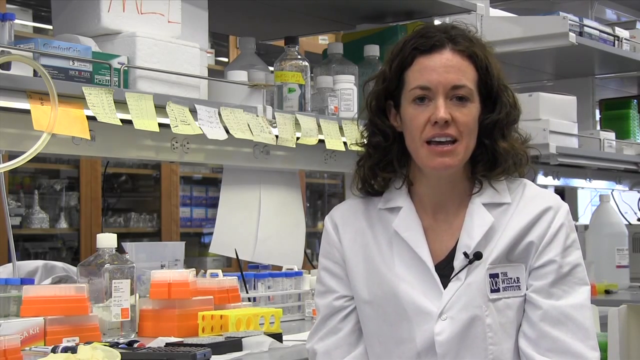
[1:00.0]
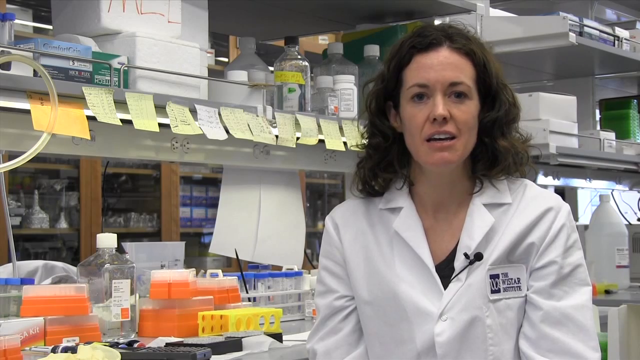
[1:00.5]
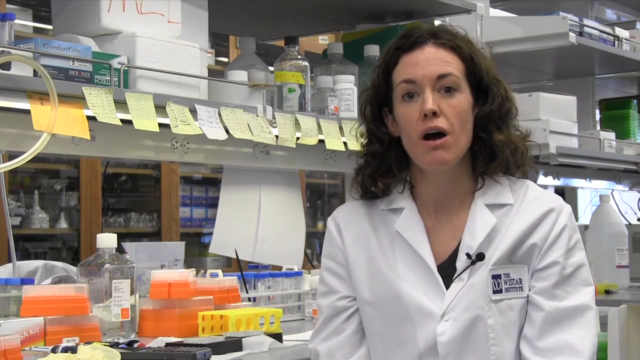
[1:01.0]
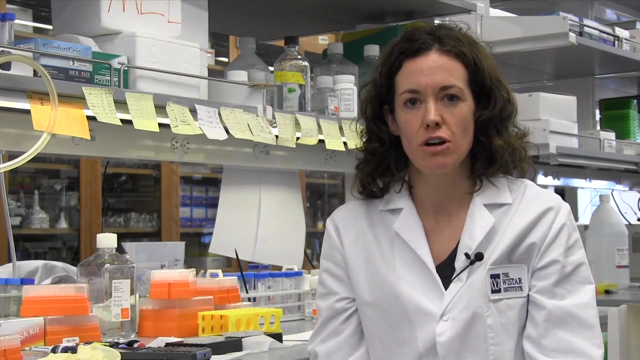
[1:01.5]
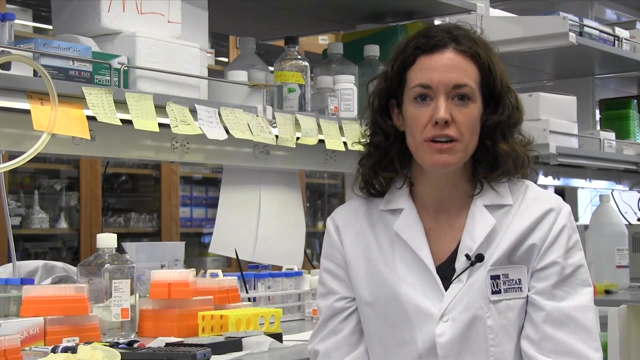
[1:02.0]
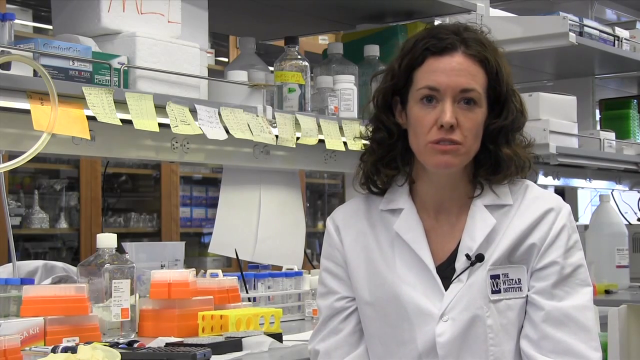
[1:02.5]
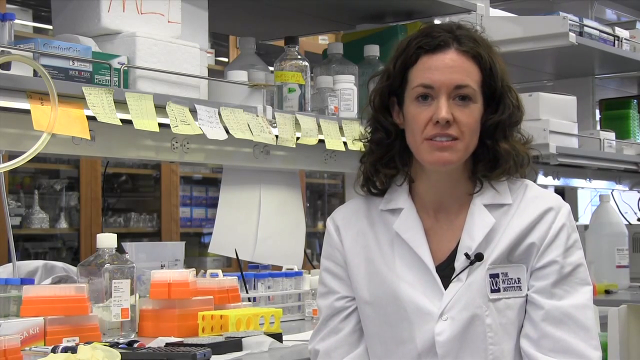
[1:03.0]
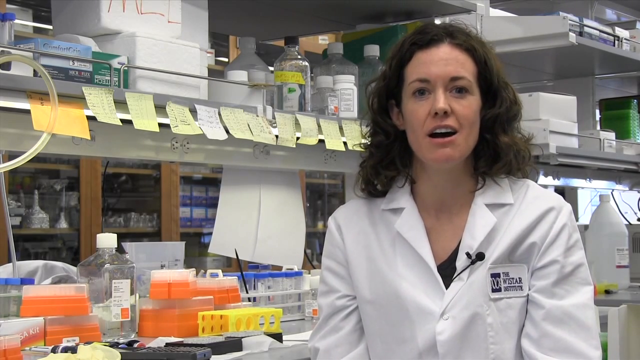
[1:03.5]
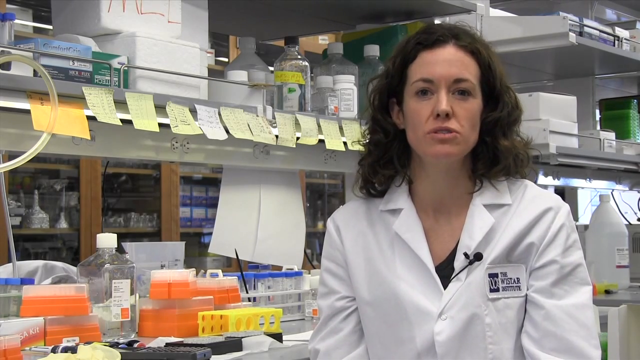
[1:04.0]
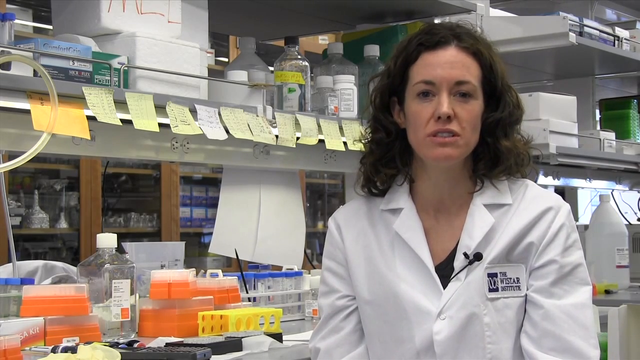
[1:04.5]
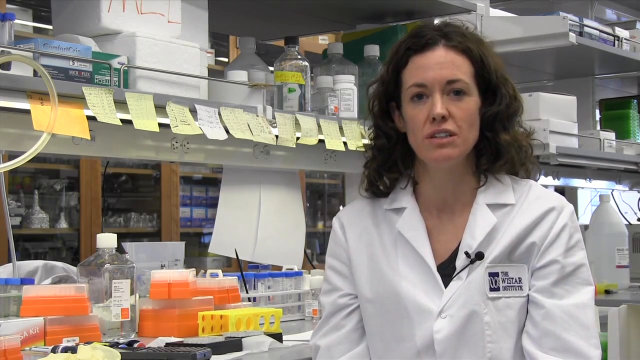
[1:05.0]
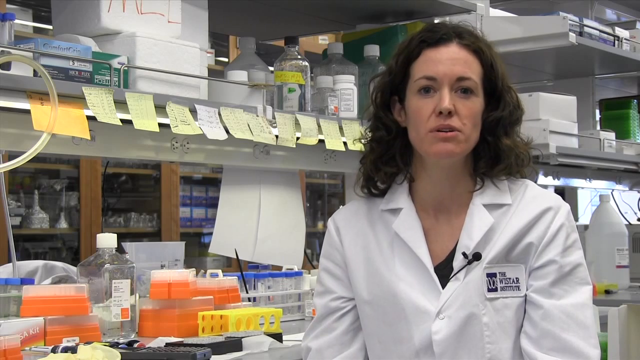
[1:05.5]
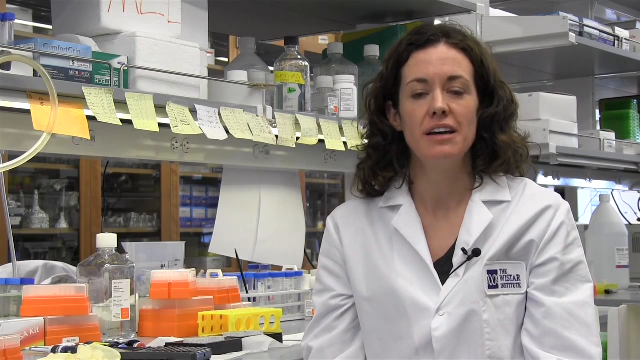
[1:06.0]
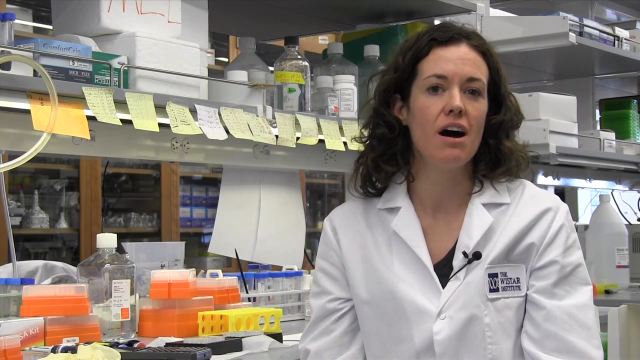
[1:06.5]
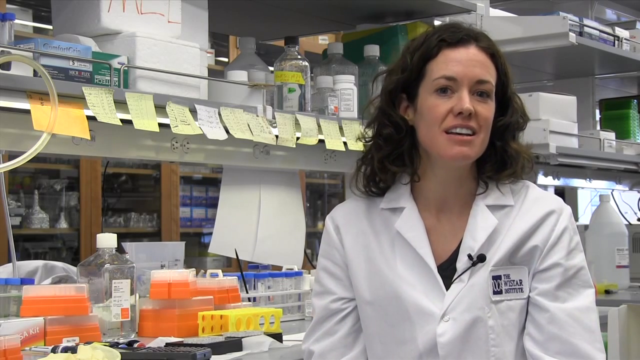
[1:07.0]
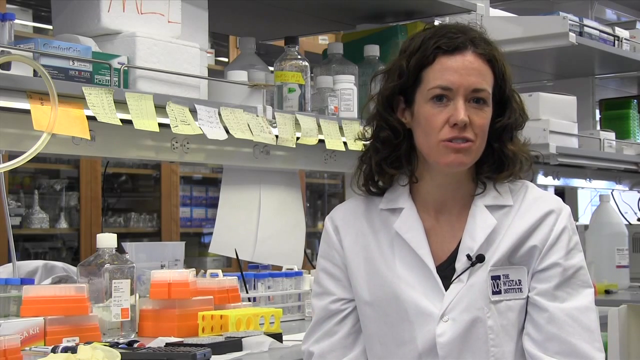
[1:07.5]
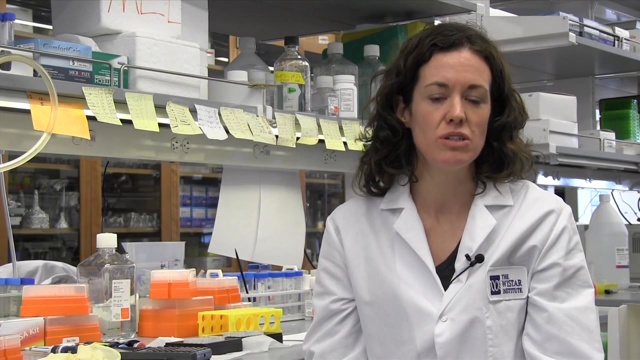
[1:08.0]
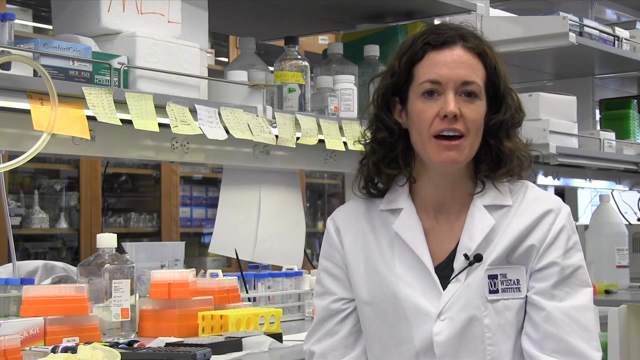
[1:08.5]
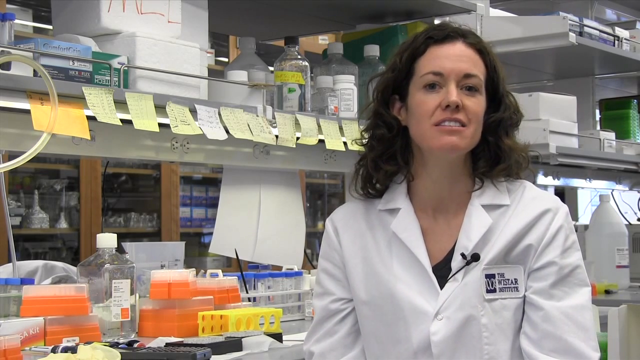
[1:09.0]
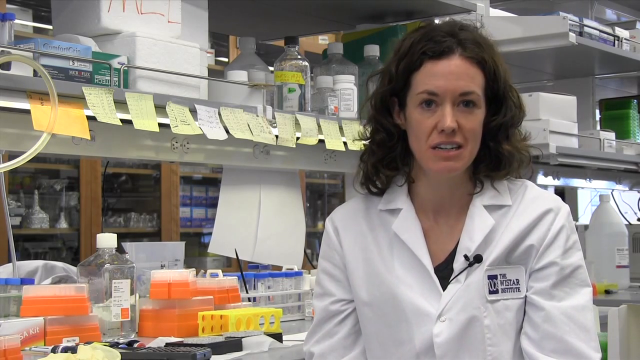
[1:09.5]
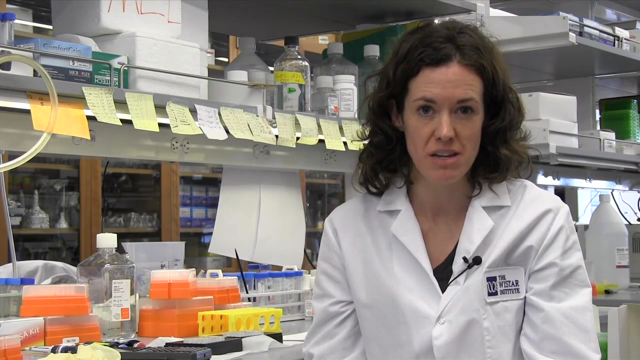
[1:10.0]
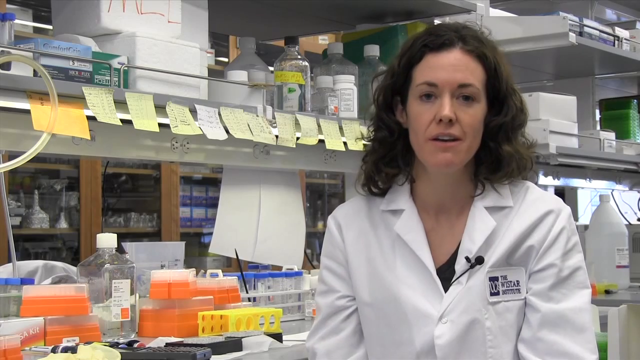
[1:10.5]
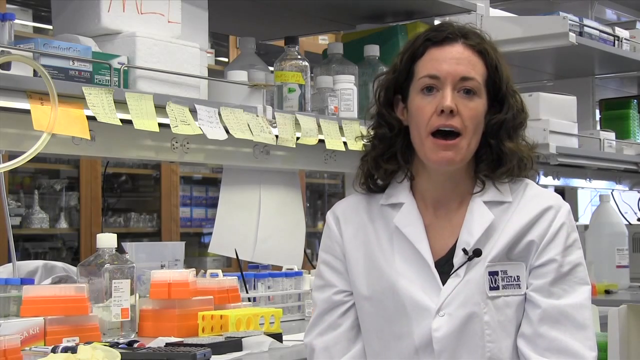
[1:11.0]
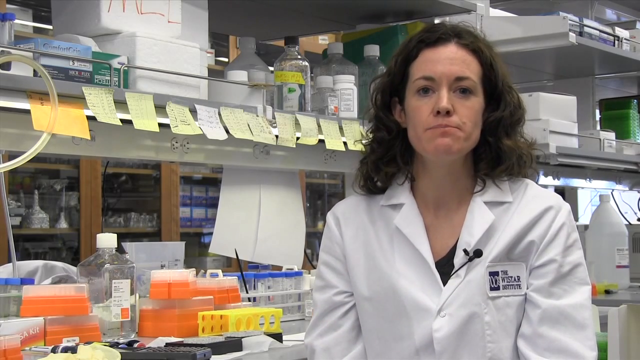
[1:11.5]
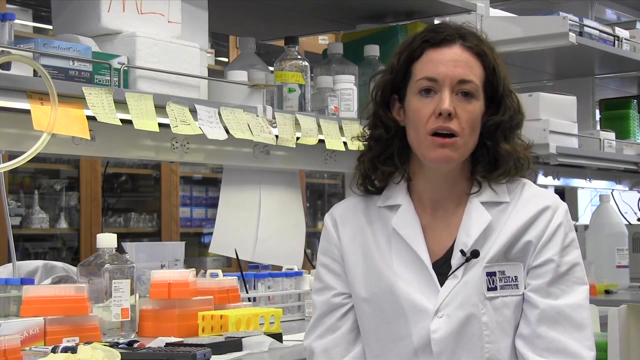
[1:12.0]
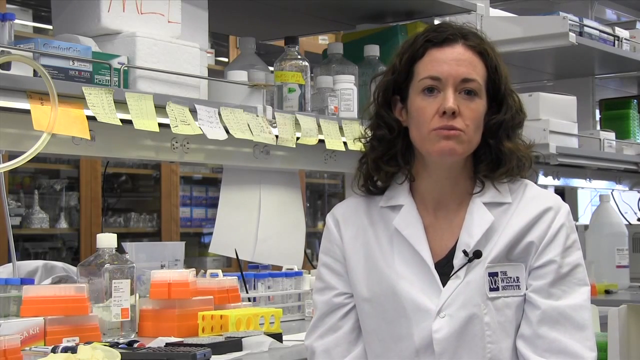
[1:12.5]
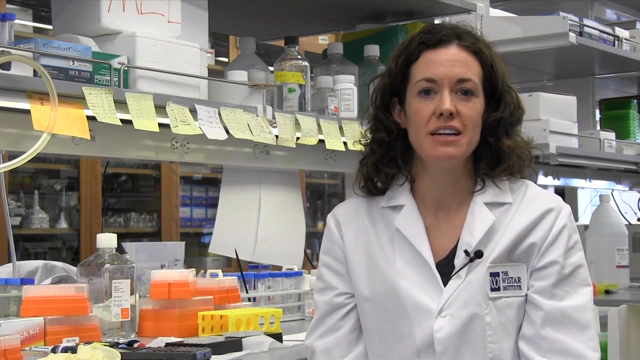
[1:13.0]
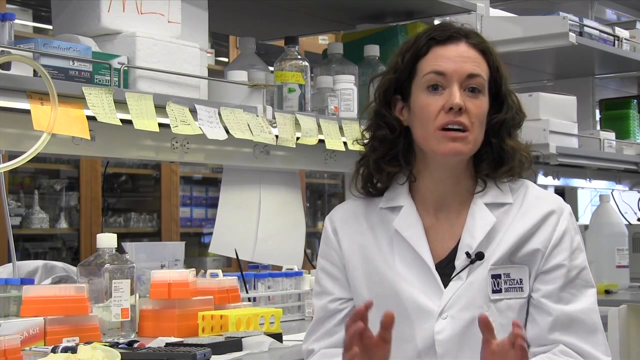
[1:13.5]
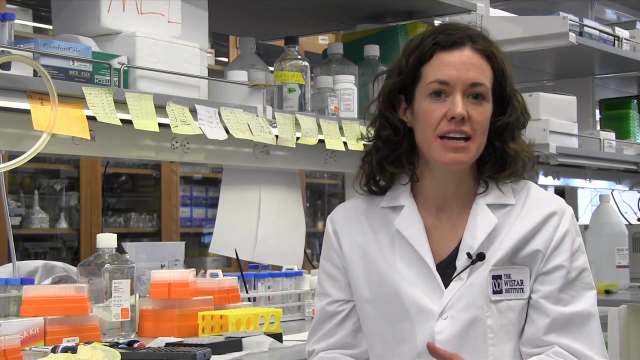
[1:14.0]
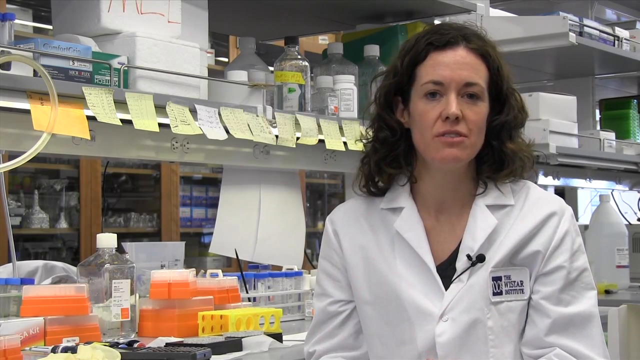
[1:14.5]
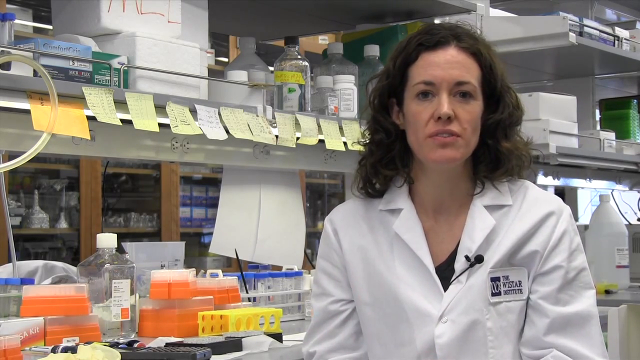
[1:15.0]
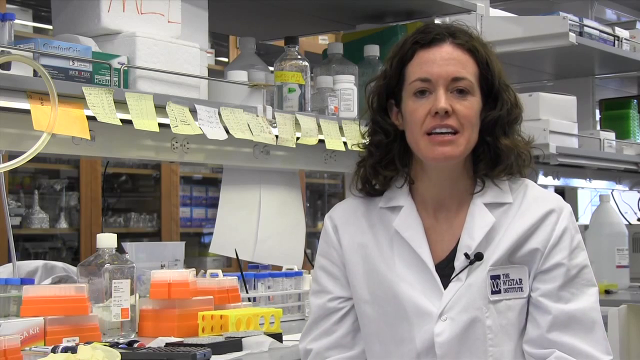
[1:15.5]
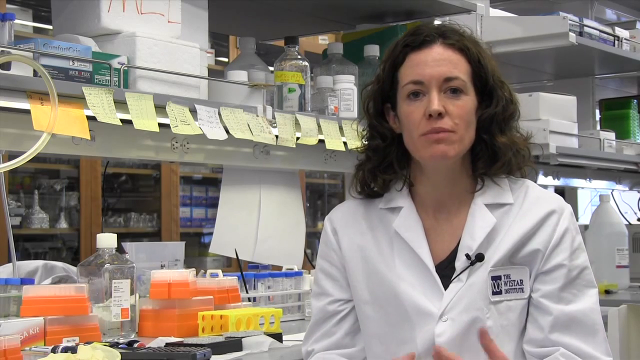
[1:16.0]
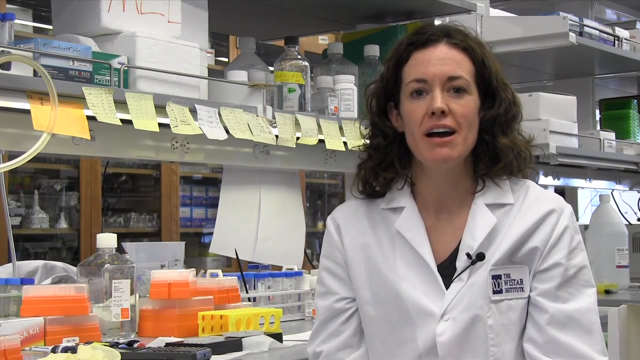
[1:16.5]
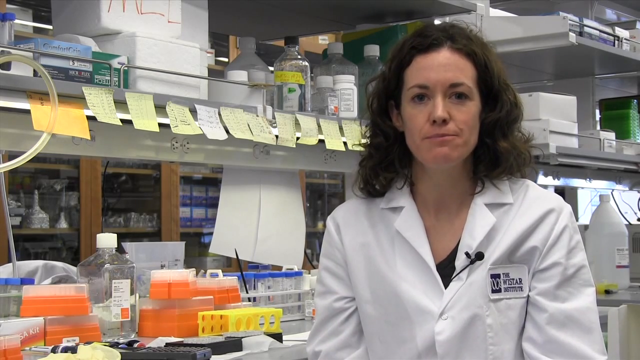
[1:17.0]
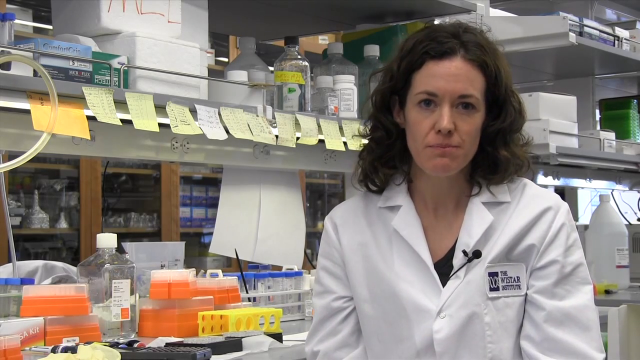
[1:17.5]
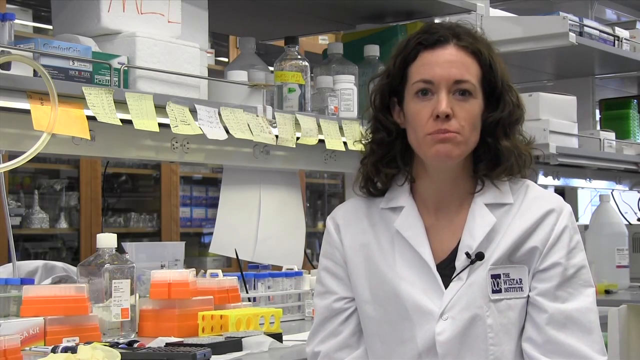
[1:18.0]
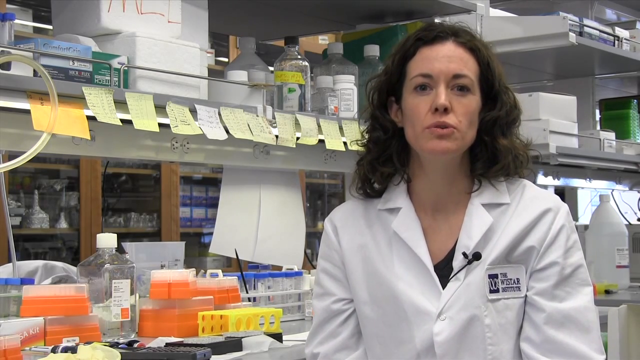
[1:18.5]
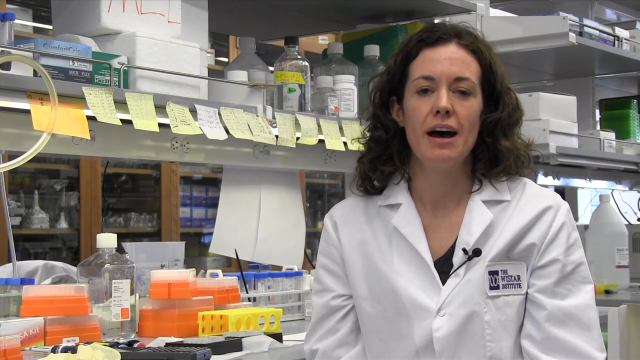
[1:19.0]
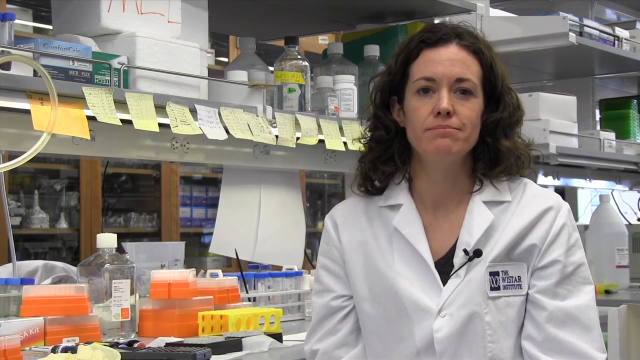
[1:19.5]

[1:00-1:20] The woman in the lab coat talks throughout. Her hair is parted a little off-center at the front and is wavy and curly. A black microphone is clipped to the lapel on the viewer's right side. Her hands appear to be at her sides while she talks, and she moves her head a bit, apparently for emphasis; most of the movement is in her head. Among the yellow and orange containers in the lower left there is also a large clear bottle, almost like a very large liquid hand soap or sanitizer bottle. A couple of pieces of paper hang down just beneath the row of sticky notes, and lots of items are stacked on top of things, so it looks like a lab. To her right, before the edge of the frame, is another large opaque white plastic container. Above that are two shelves; in the middle of the first shelf is something green and plastic, and the other shelves hold many containers that look like rubbing alcohol containers, along with clear bottles. To the left, a bit of curved clear tubing runs off screen.